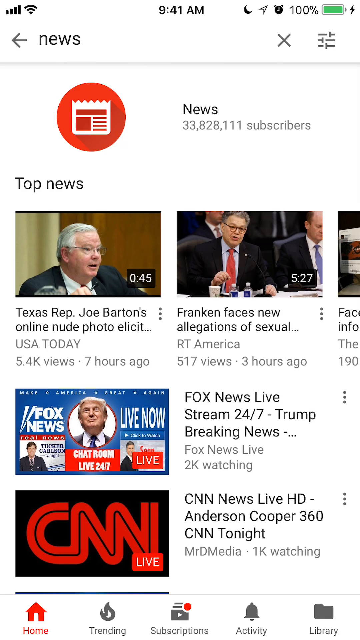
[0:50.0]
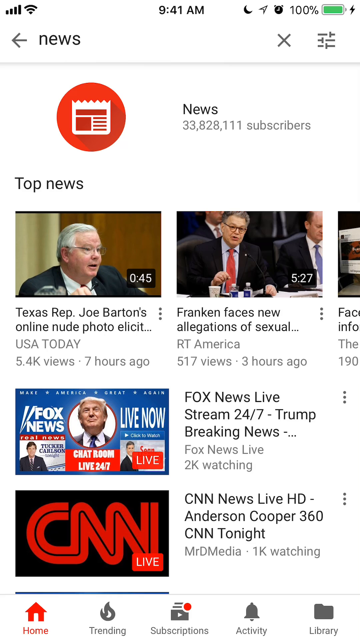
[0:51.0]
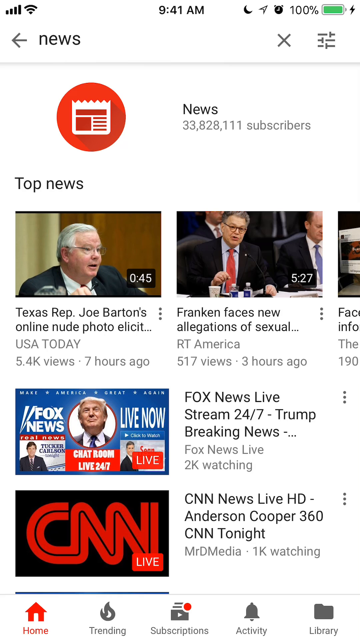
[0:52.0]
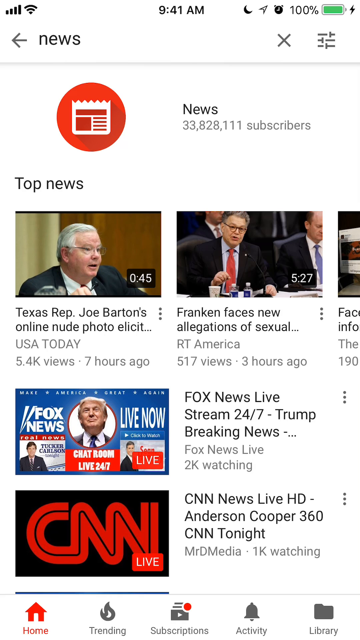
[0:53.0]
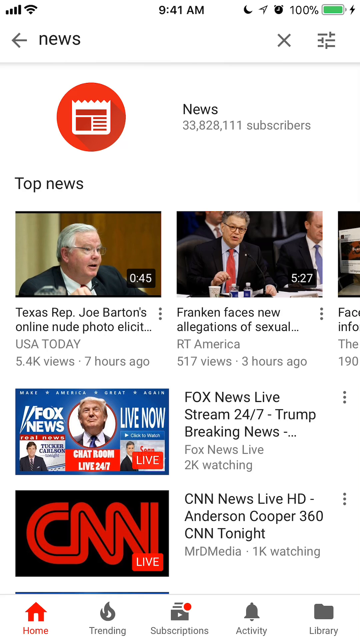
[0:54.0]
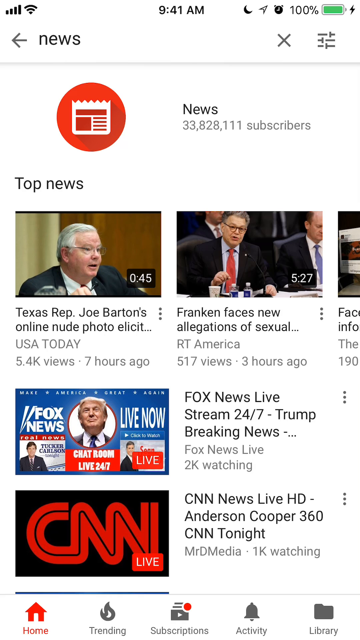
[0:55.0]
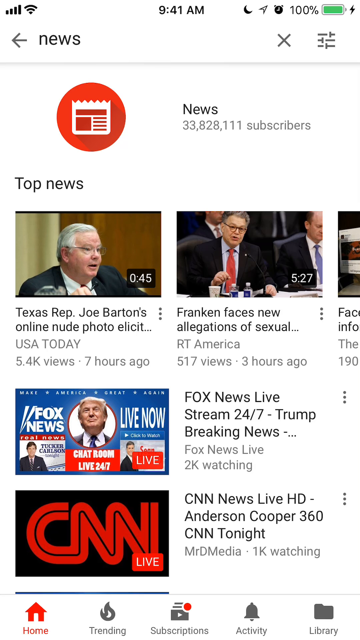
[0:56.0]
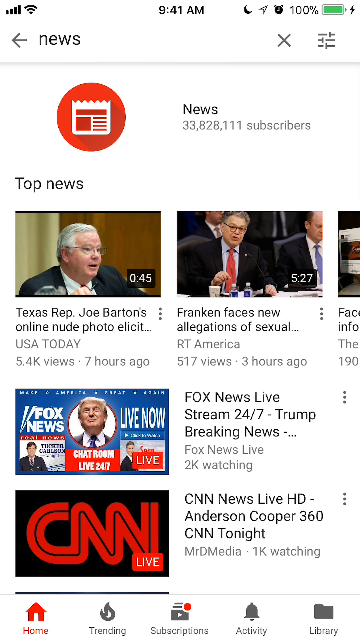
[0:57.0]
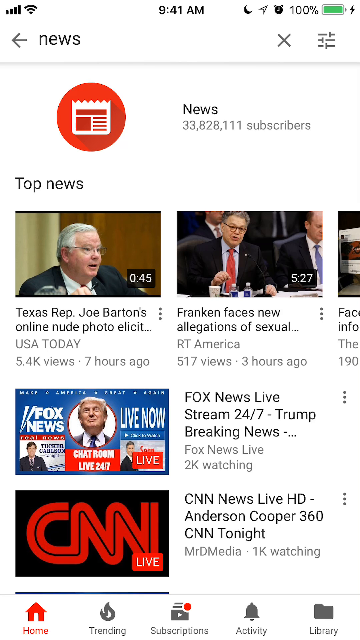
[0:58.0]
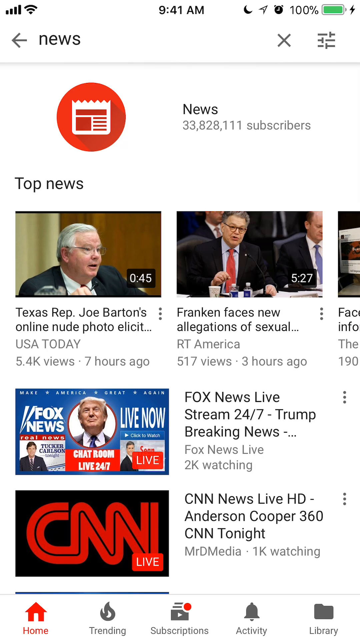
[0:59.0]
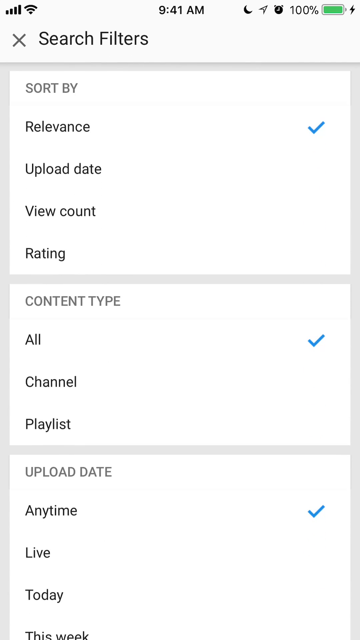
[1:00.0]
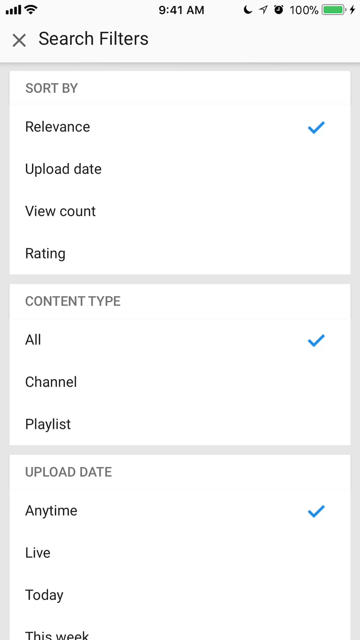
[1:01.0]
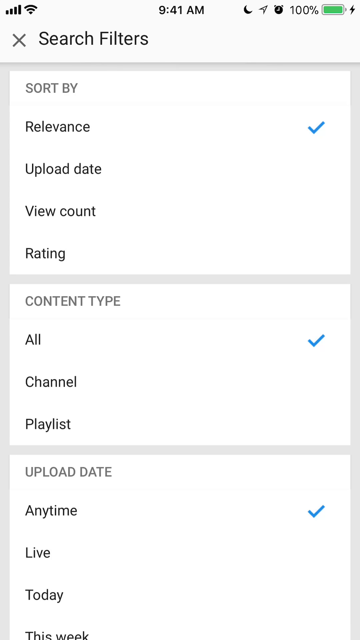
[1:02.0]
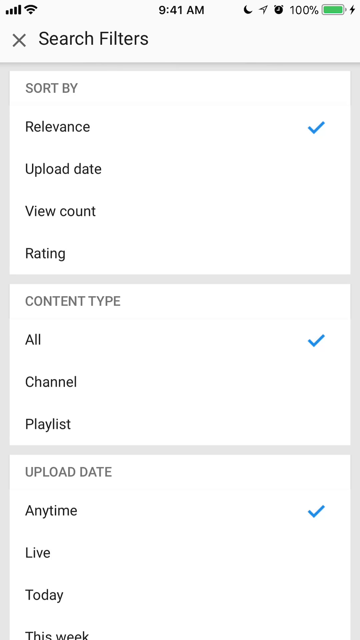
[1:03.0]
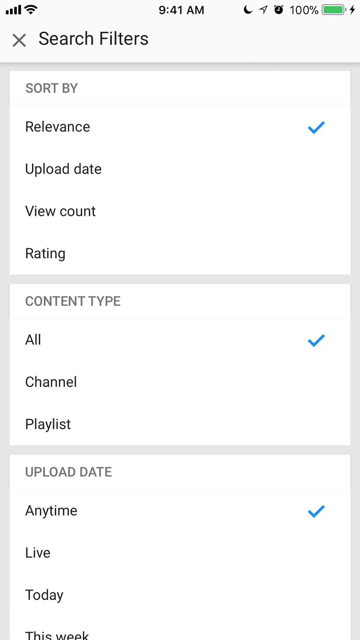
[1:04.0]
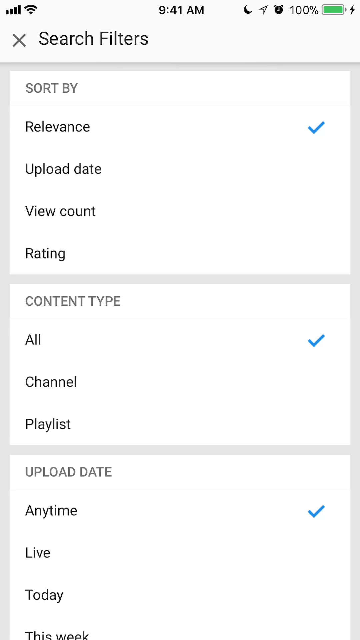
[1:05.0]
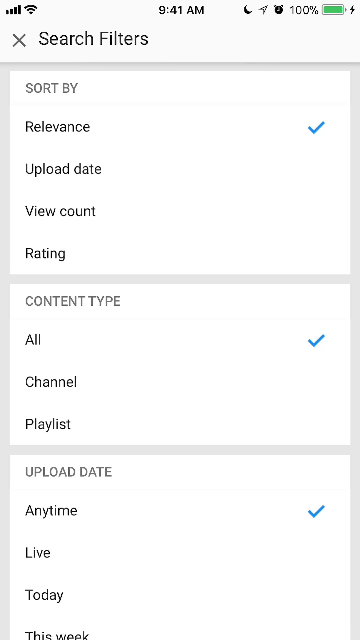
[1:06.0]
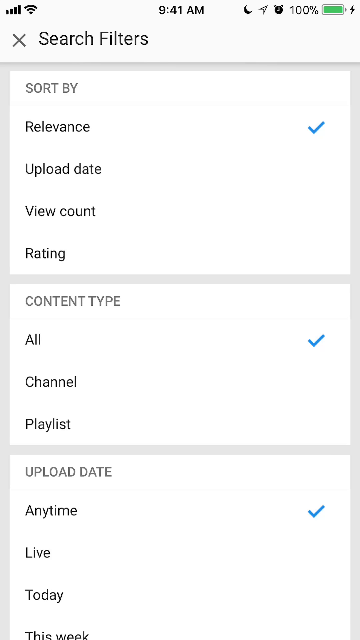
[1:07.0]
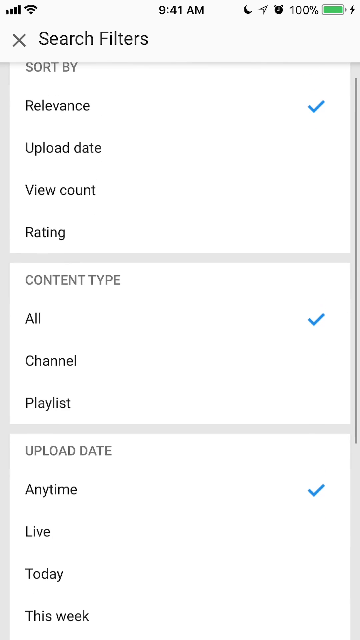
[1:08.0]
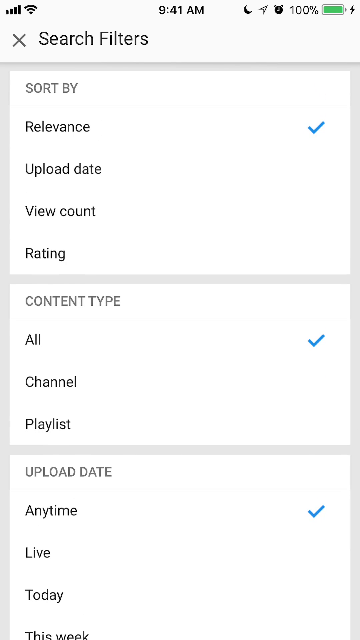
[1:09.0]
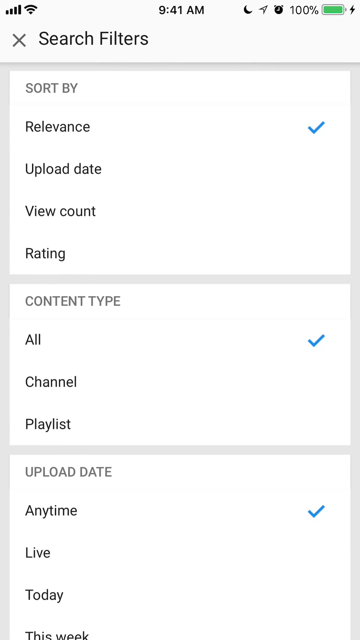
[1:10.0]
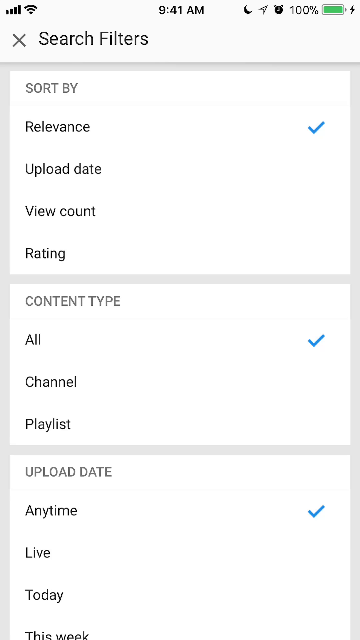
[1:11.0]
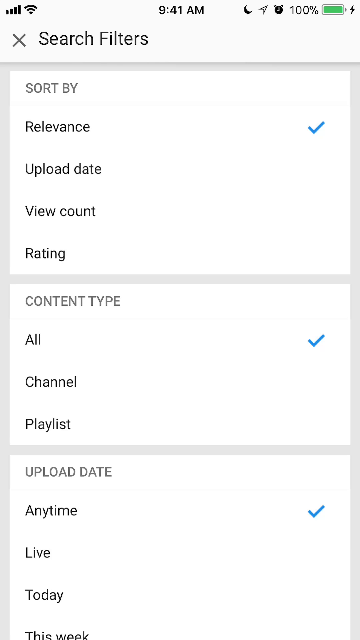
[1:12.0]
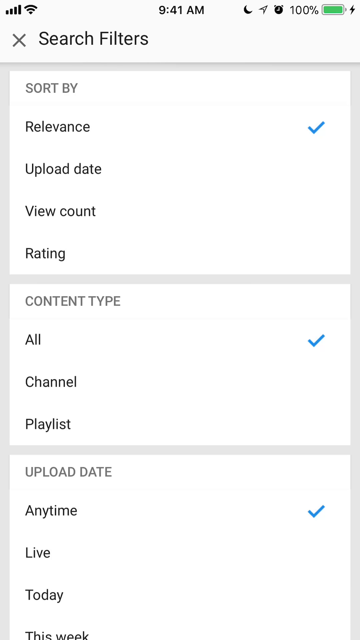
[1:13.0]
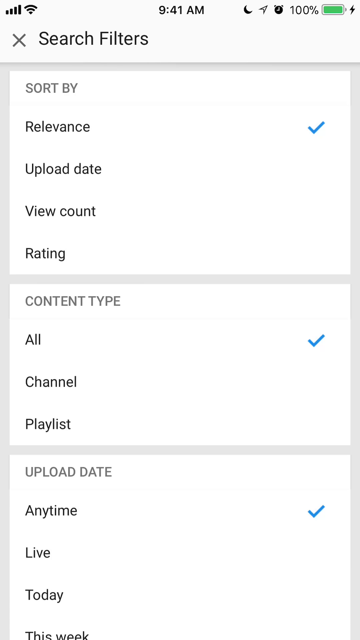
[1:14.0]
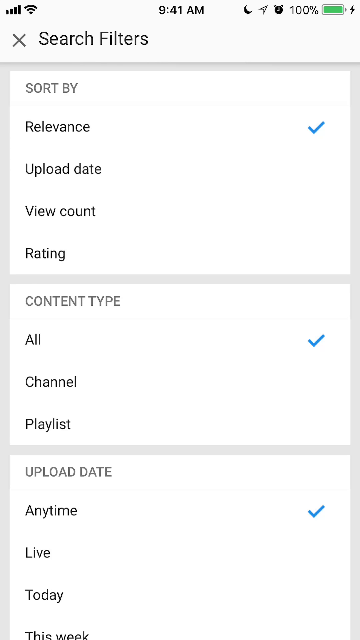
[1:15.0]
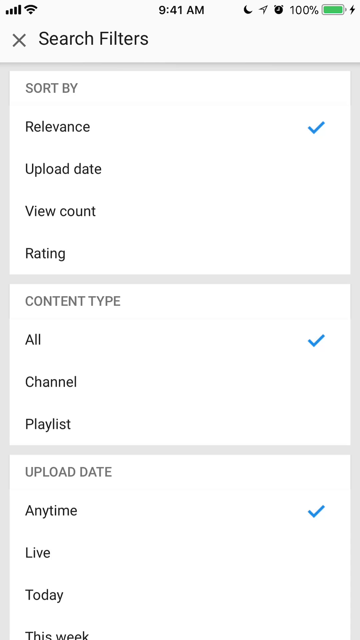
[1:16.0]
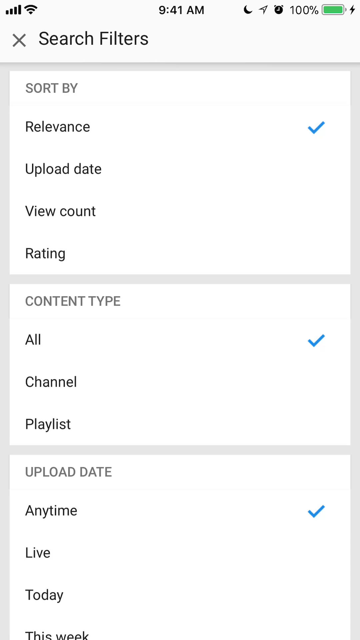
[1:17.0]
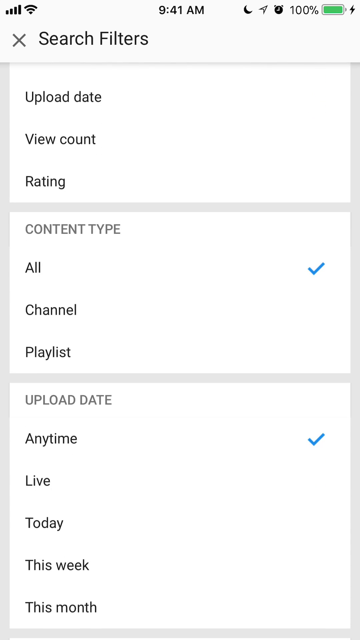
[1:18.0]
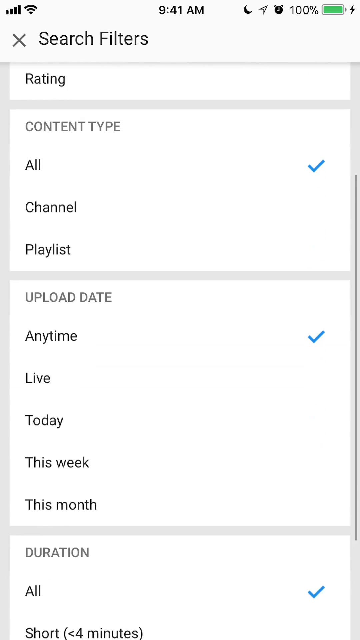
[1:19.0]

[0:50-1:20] The results page for news, or possibly the channel page for news, shows the title "news" with over 33 million subscribers and a red circle containing a newspaper icon. Below it is a top news section with videos in a horizontal carousel, and below the carousel more news is arranged vertically. The user apparently scrolls; the videos mainly show the faces of politicians, and one video shows the CNN logo. The user then taps somewhere and a search filters option appears. It offers sort by relevance, upload date, view count or rating; content type all, channel or playlist; and upload date anytime, live or today. Currently selected are sort by relevance, content type all, and upload date anytime. The user scrolls the screen a little, probably to show the available options.